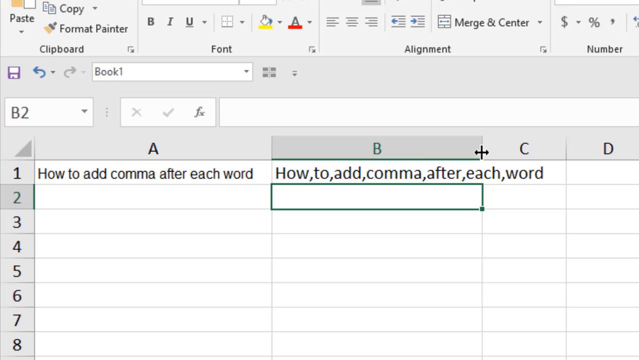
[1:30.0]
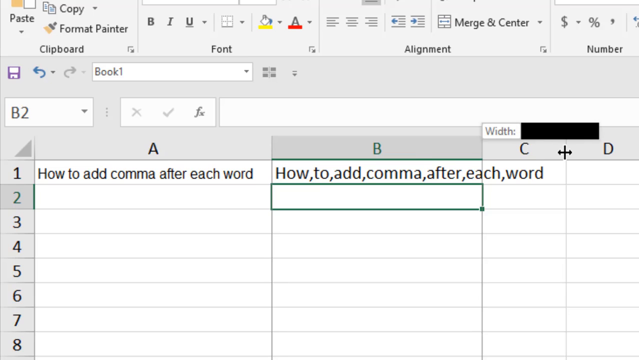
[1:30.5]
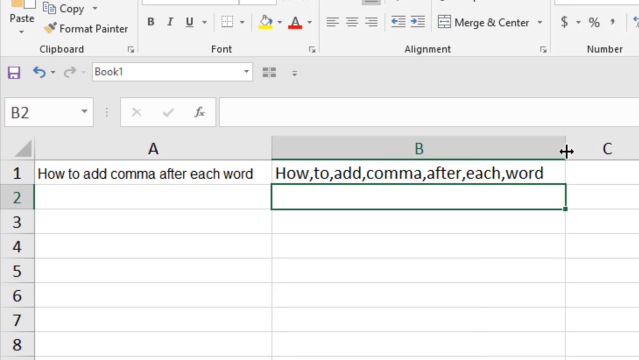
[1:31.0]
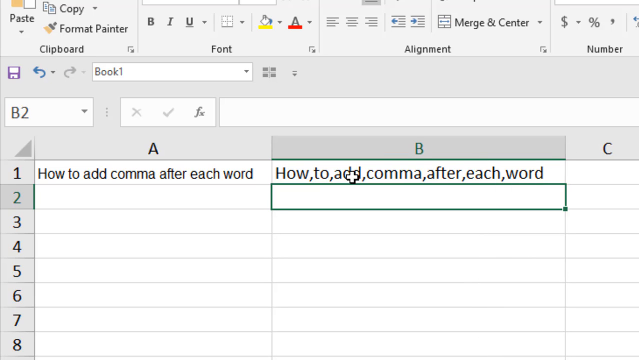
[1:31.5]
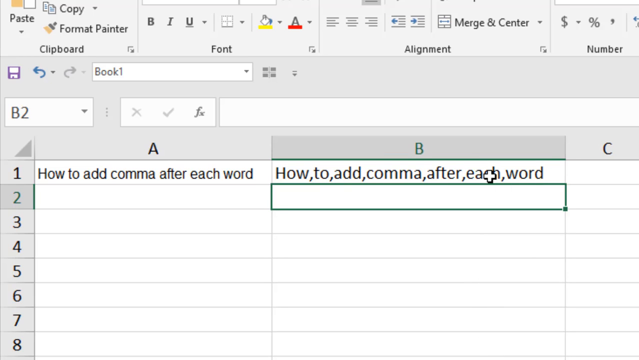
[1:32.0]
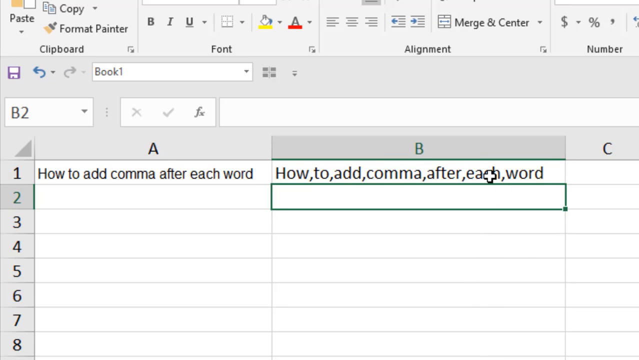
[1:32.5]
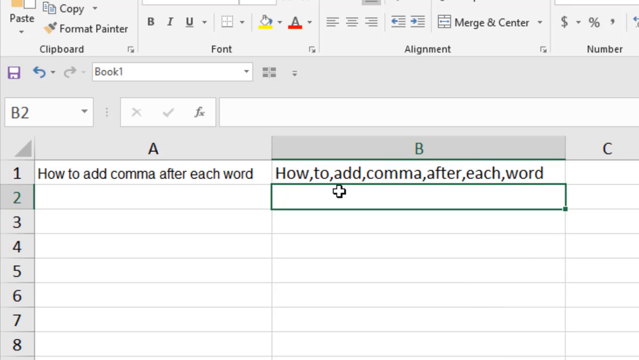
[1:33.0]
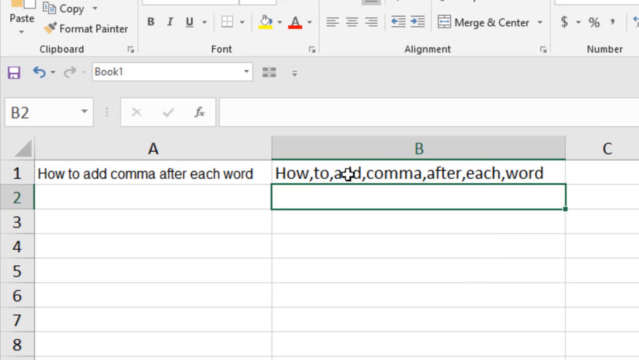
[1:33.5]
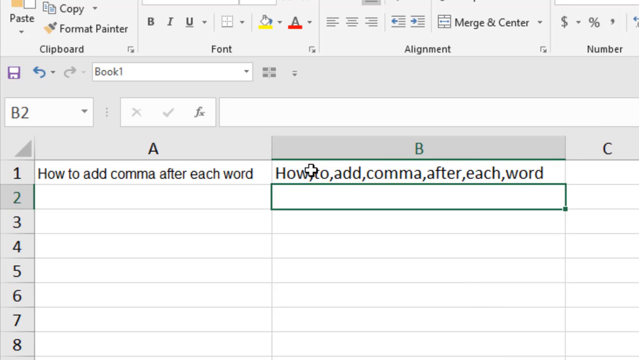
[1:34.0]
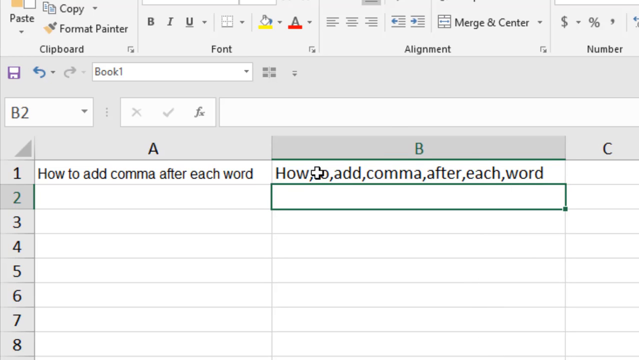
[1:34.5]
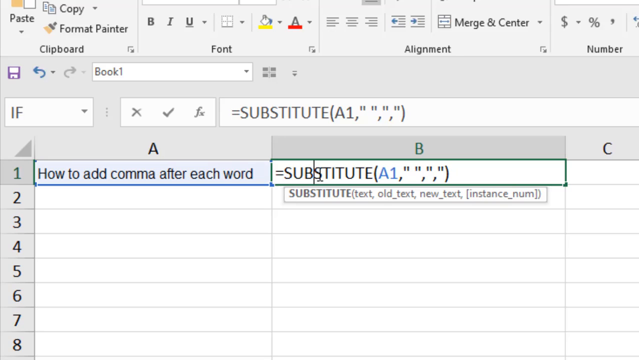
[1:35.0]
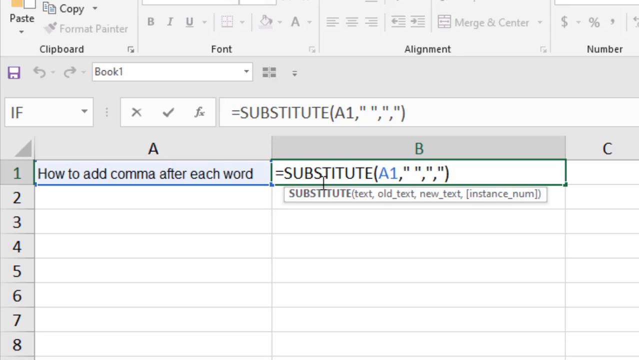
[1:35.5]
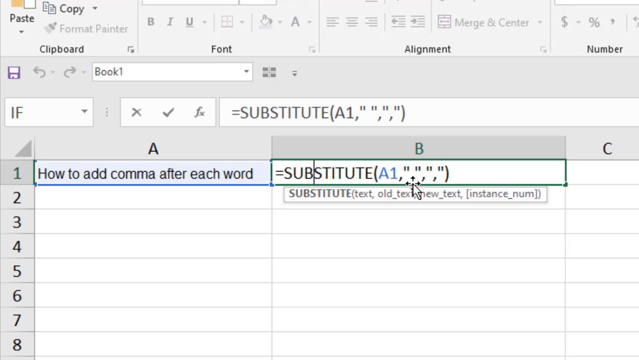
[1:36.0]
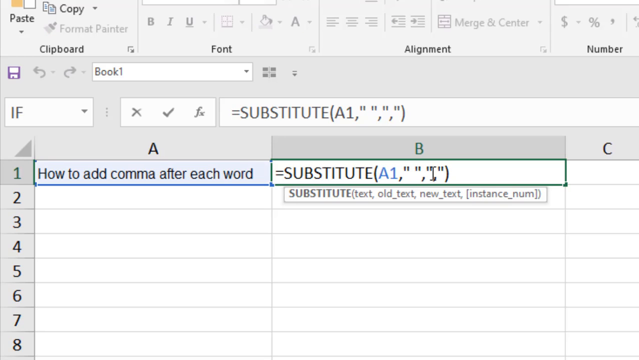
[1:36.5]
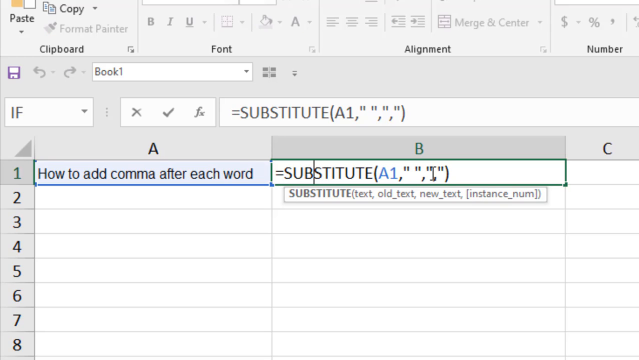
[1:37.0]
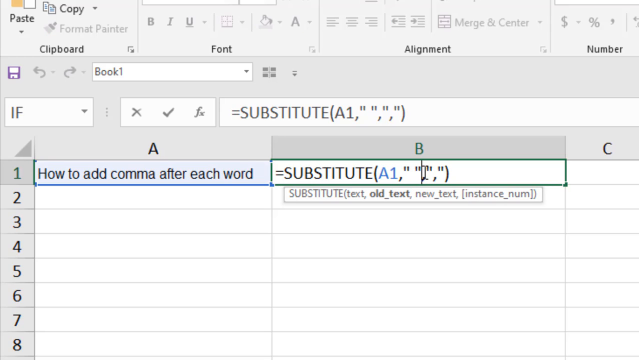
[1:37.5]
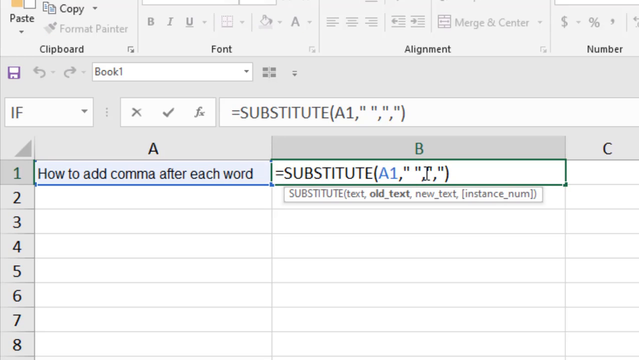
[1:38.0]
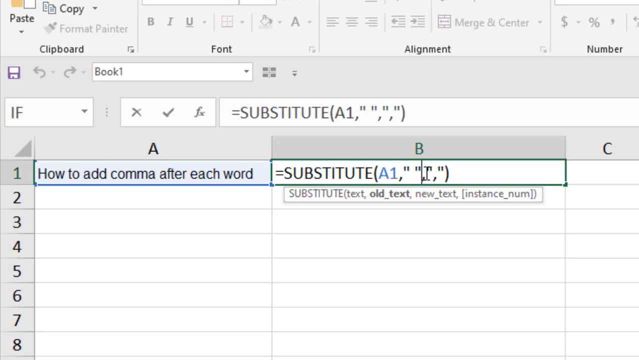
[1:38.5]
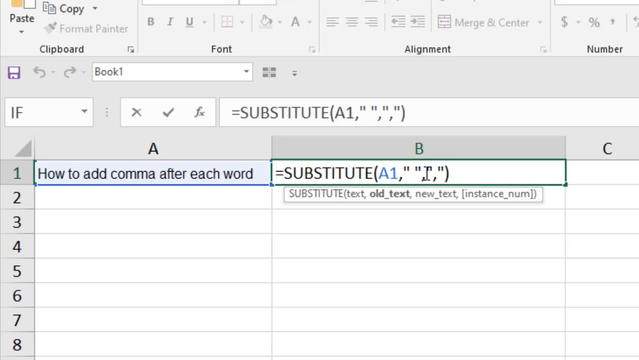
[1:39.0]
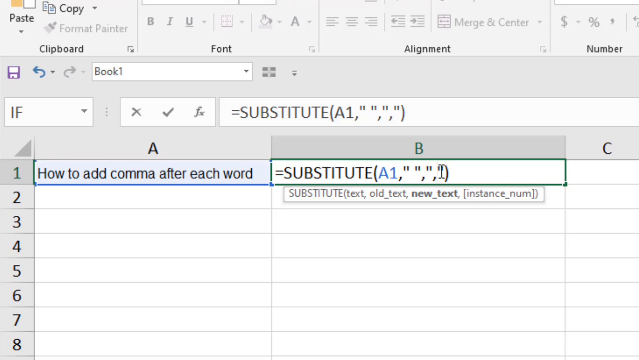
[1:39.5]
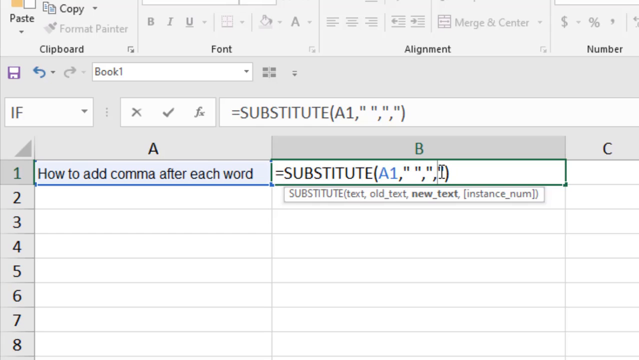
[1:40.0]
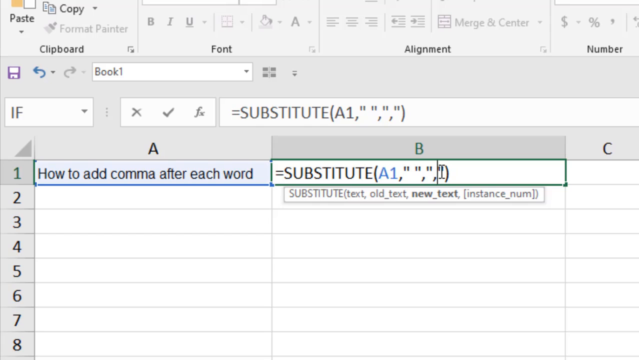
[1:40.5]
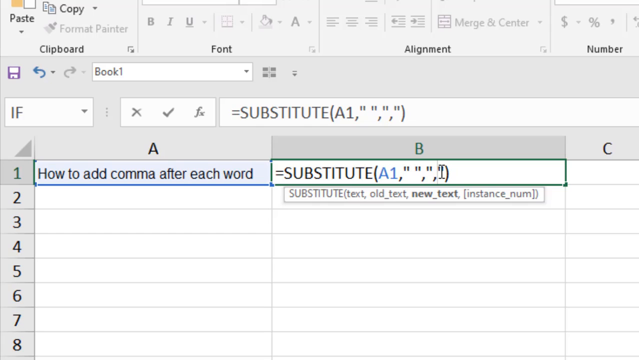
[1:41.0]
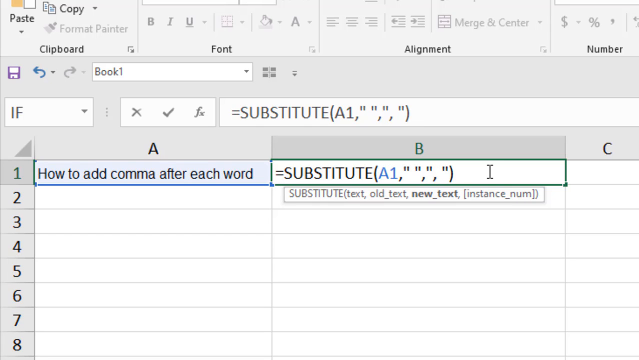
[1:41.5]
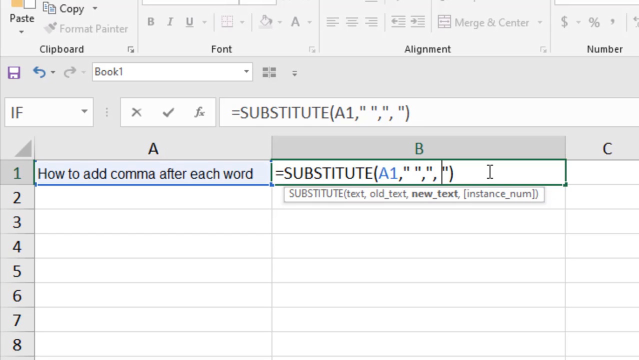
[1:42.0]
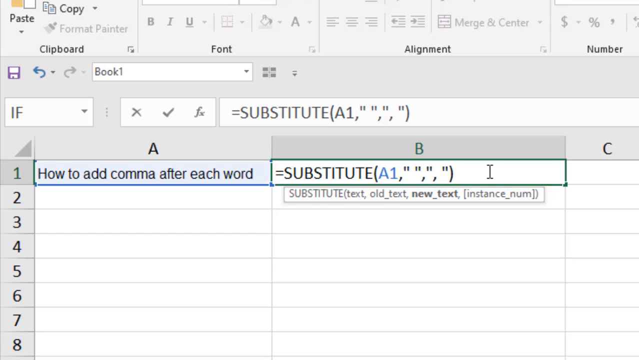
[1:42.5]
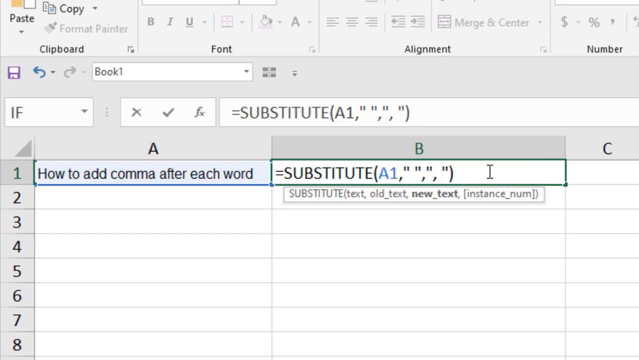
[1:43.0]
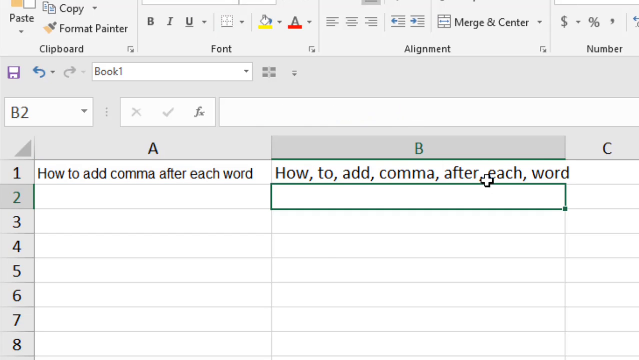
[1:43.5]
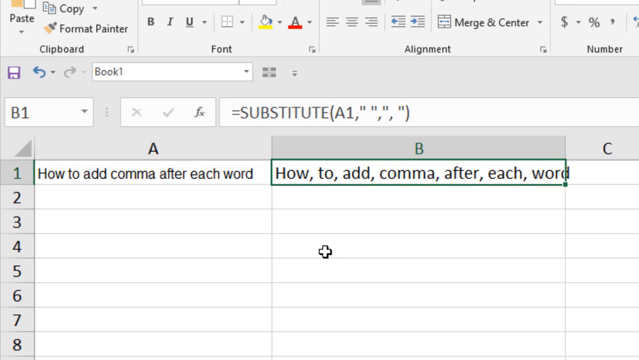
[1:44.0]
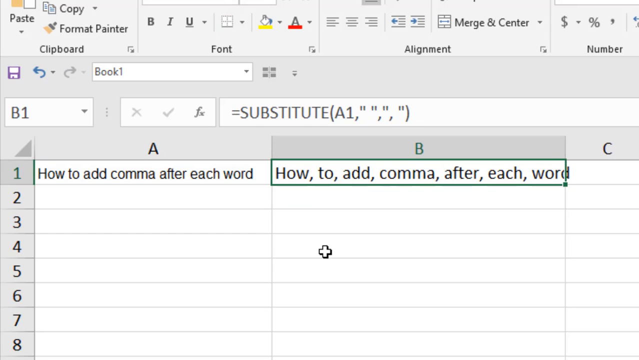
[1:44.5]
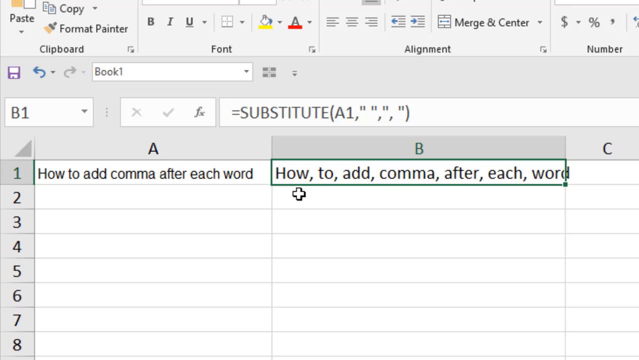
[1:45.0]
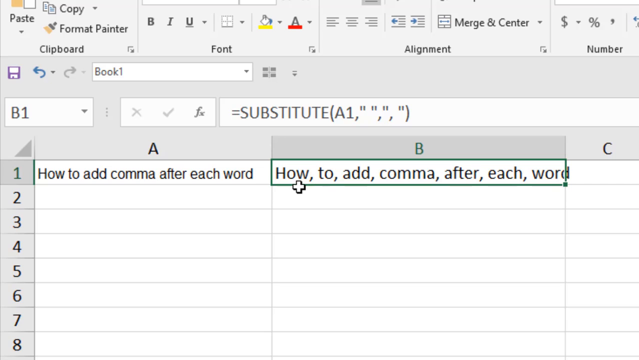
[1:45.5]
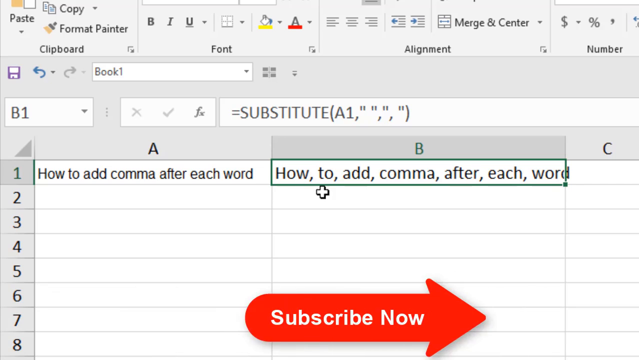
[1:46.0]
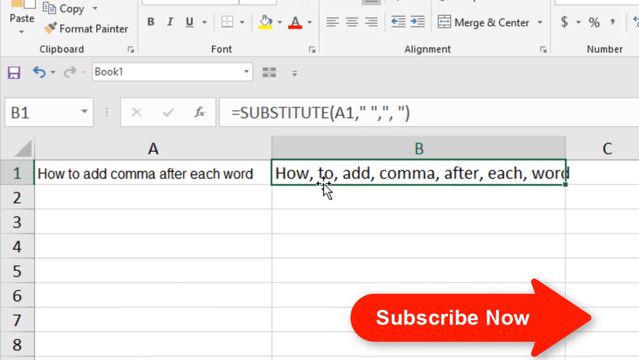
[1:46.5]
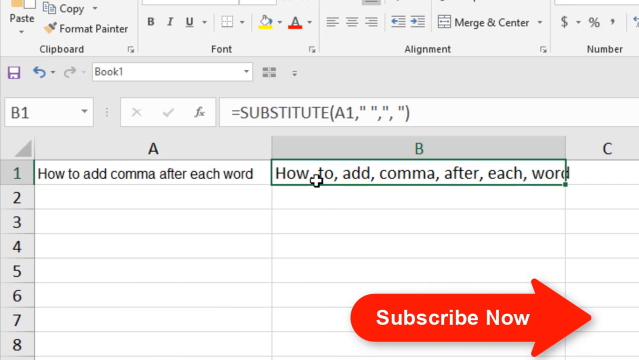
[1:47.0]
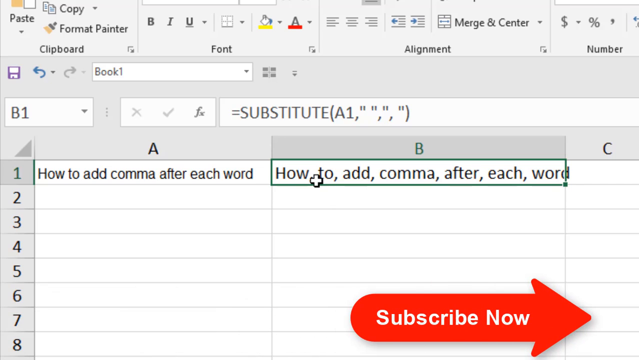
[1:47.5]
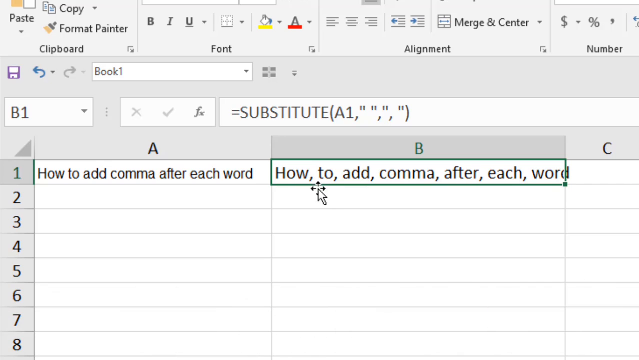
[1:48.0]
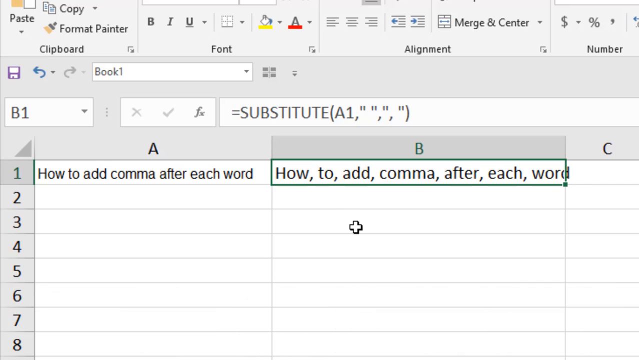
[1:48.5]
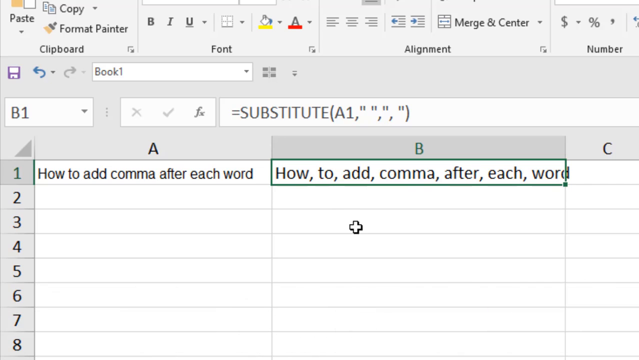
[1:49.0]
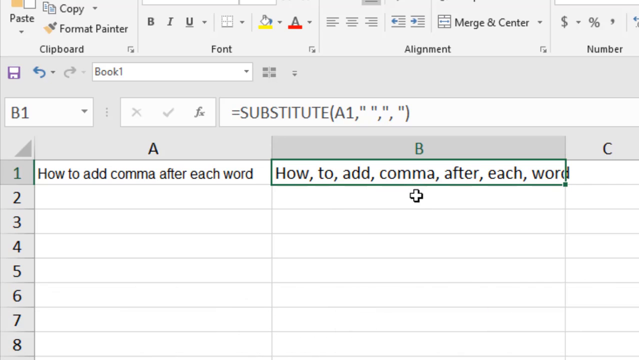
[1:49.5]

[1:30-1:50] In the same spreadsheet, row 1, column A reads "how to add comma after each word", and row 1, column B shows the same sentence with a comma added after each word by the substitute formula. The author moves down to row 2, column B and highlights it, then changes the width using the row underneath it. The substitute formula with "A1," is shown and altered slightly by adding a space, so that a space appears between the words after every comma.